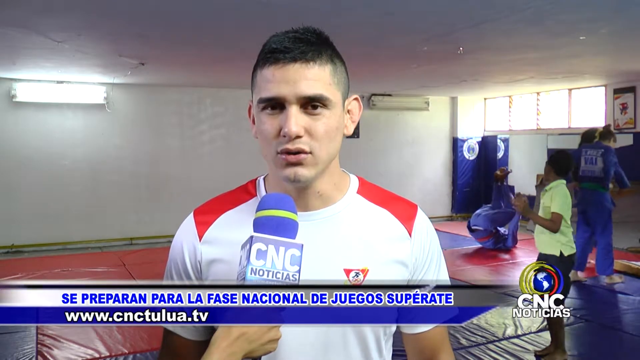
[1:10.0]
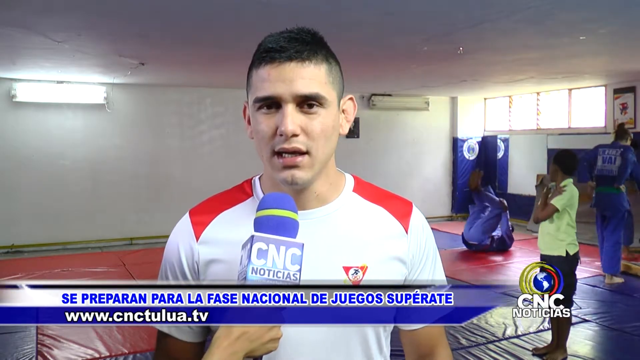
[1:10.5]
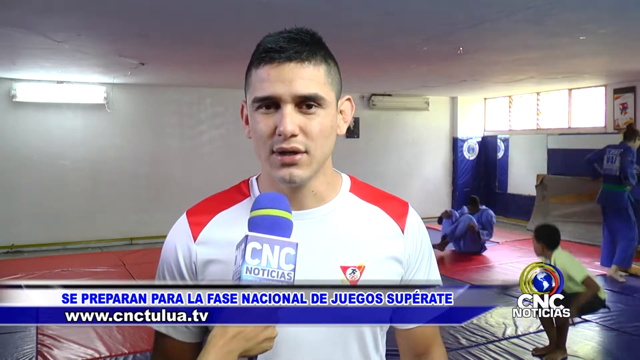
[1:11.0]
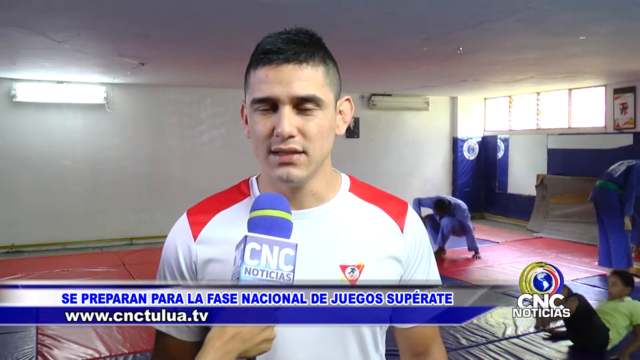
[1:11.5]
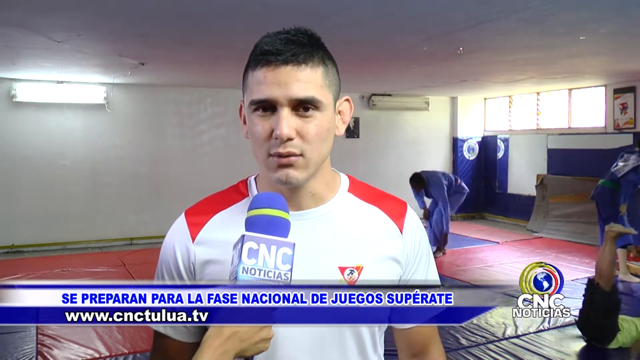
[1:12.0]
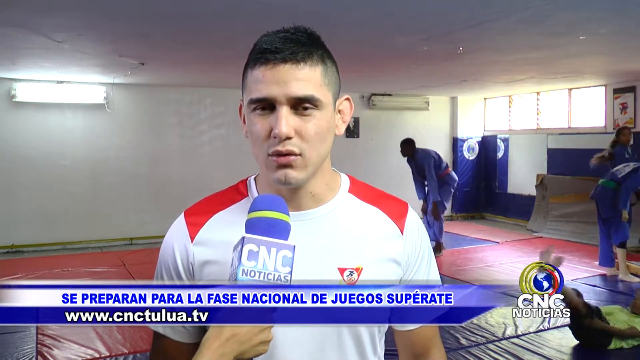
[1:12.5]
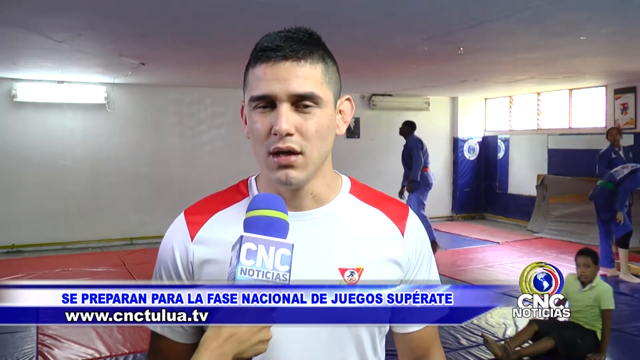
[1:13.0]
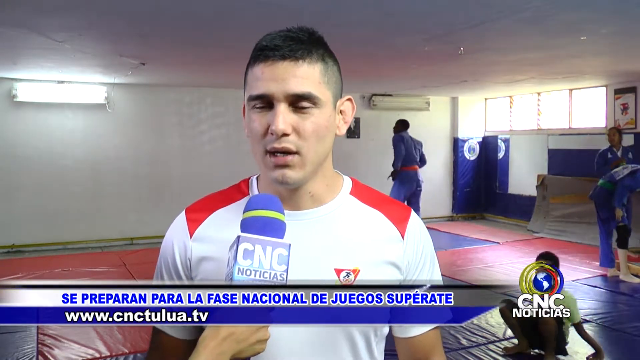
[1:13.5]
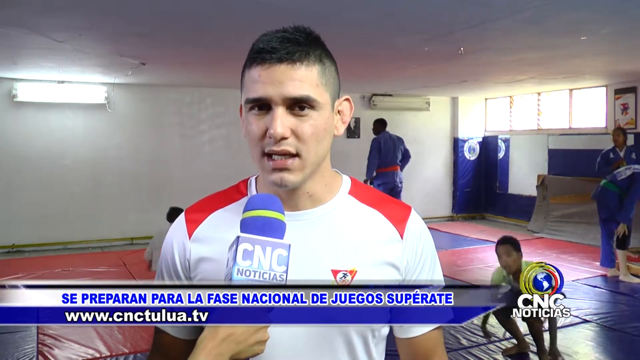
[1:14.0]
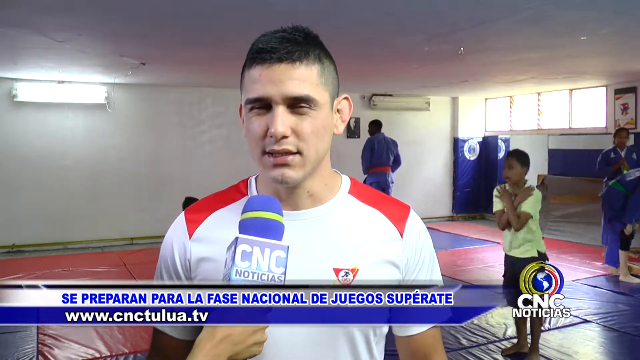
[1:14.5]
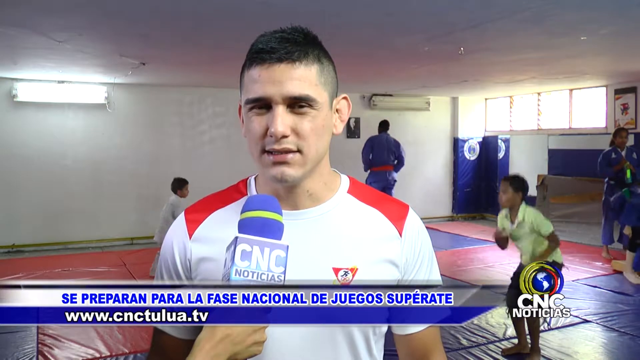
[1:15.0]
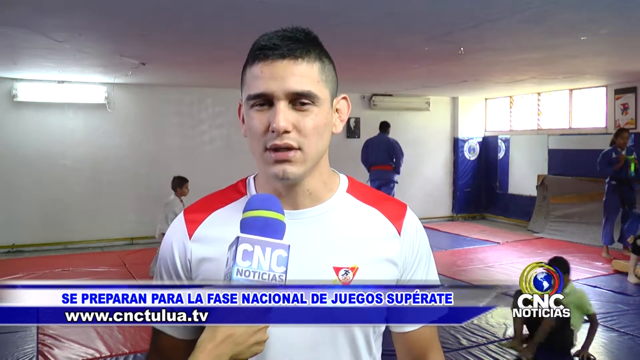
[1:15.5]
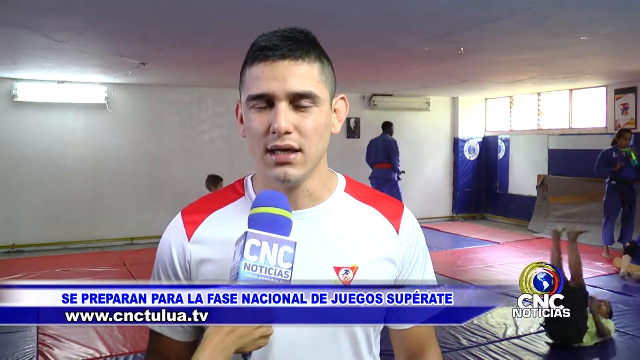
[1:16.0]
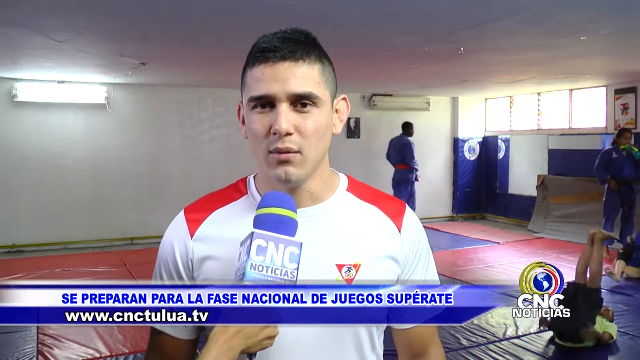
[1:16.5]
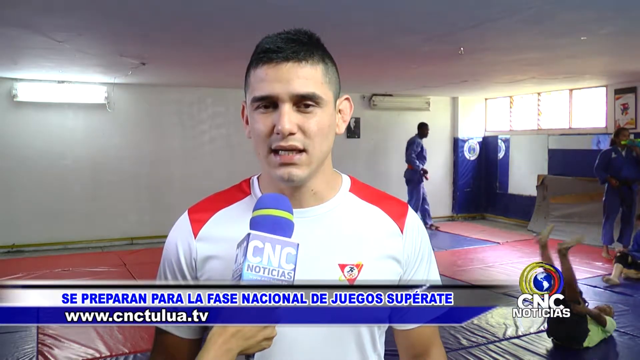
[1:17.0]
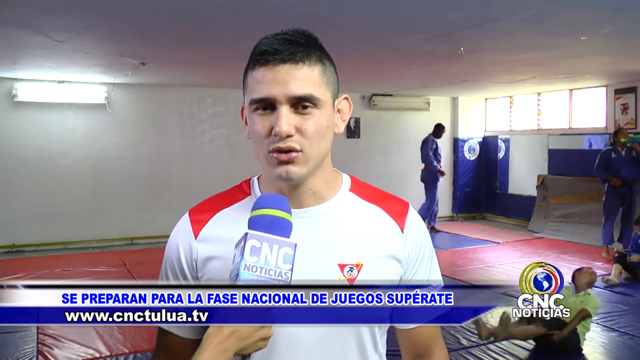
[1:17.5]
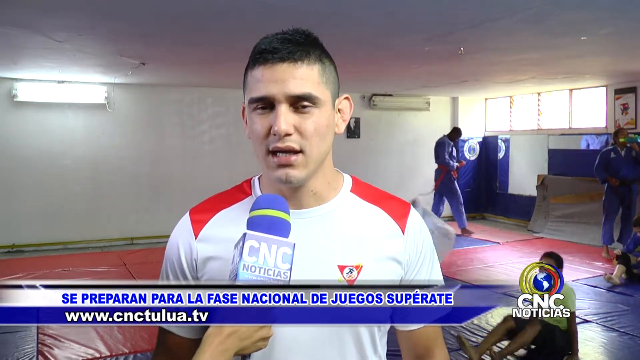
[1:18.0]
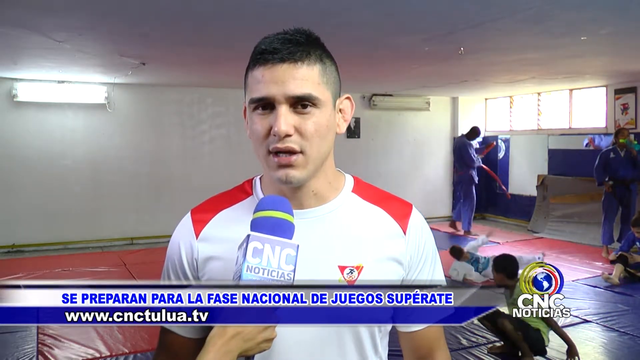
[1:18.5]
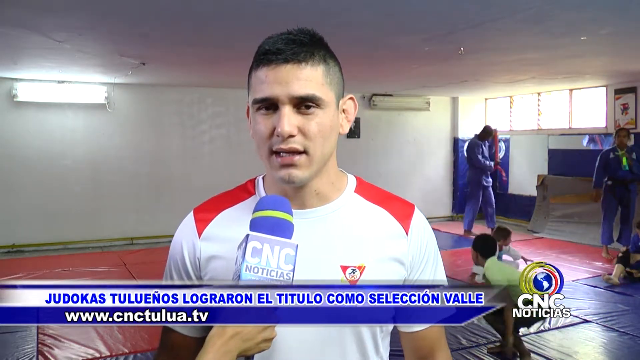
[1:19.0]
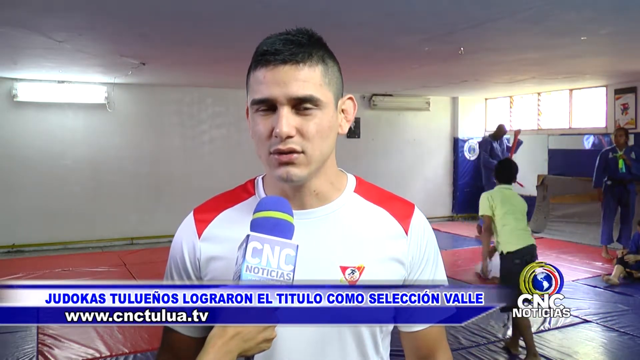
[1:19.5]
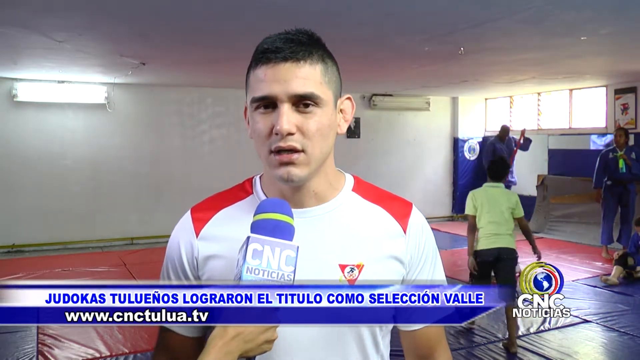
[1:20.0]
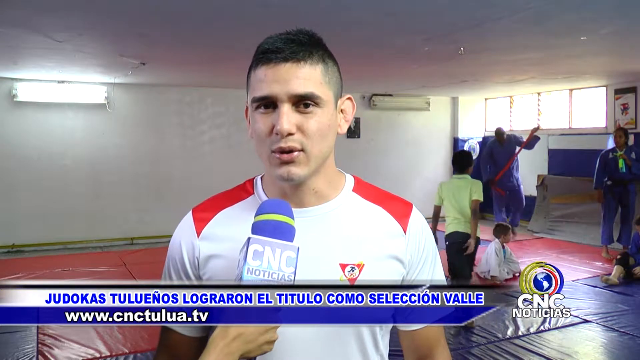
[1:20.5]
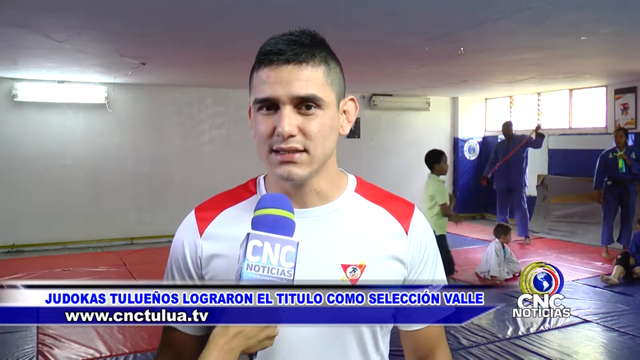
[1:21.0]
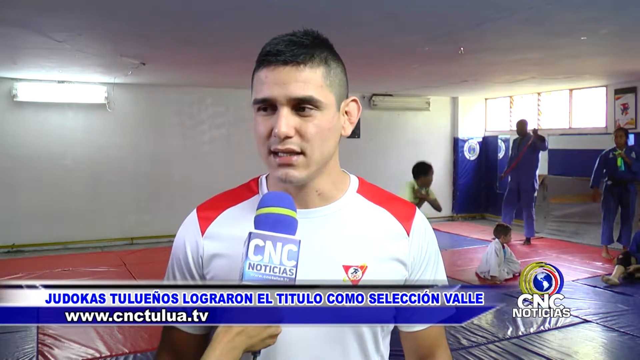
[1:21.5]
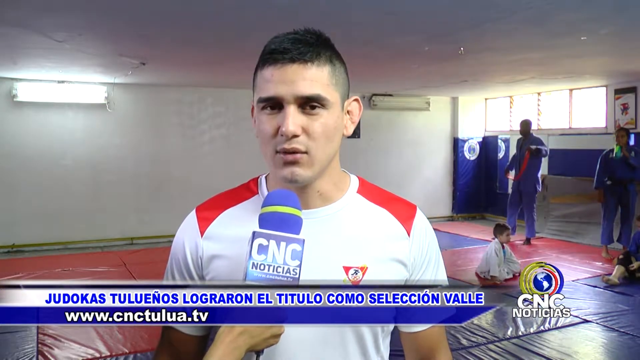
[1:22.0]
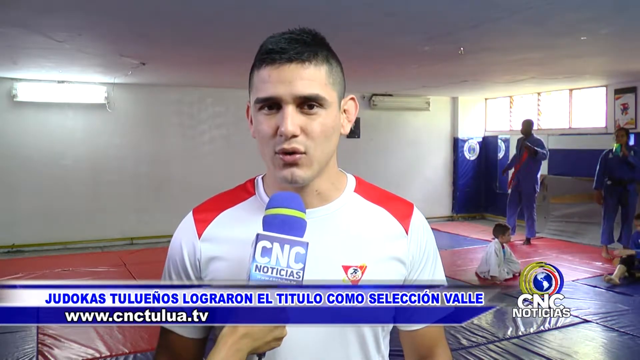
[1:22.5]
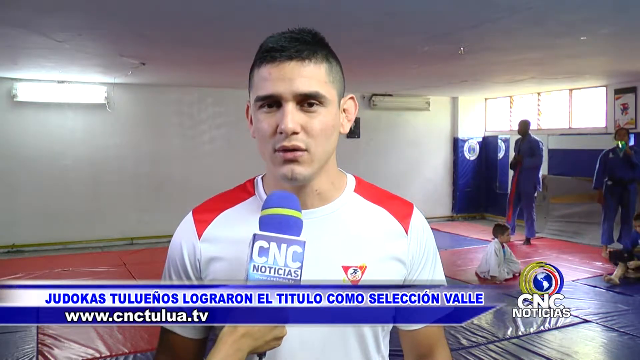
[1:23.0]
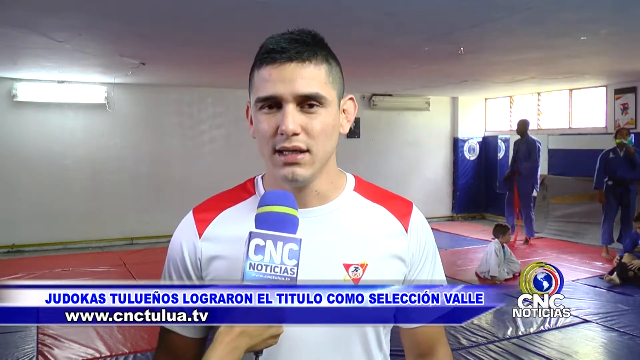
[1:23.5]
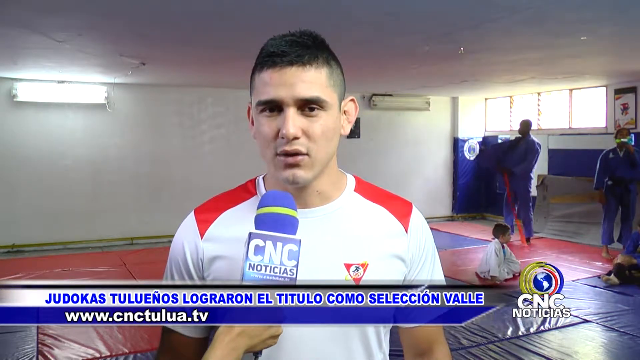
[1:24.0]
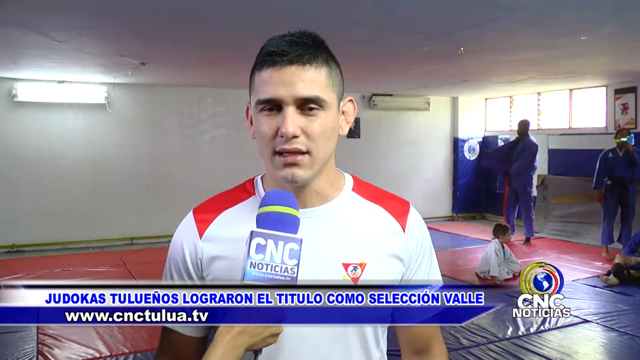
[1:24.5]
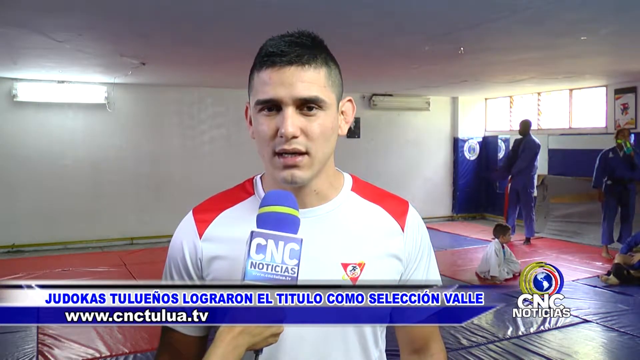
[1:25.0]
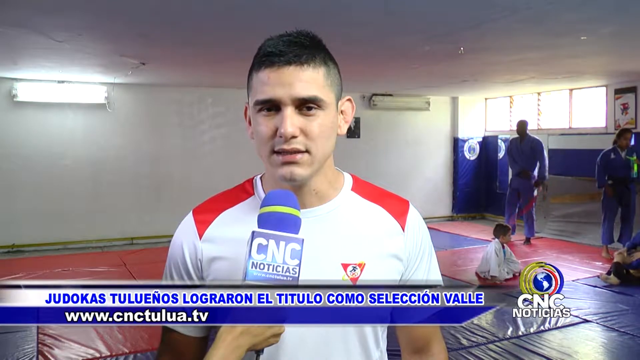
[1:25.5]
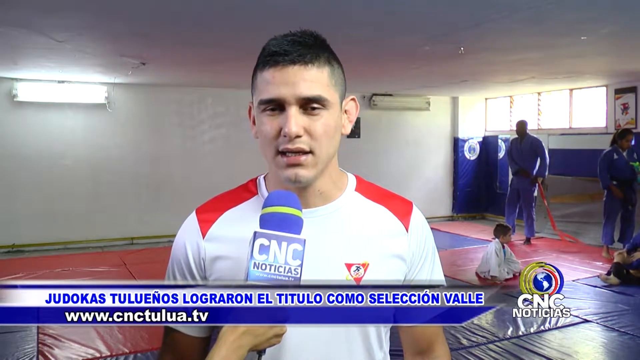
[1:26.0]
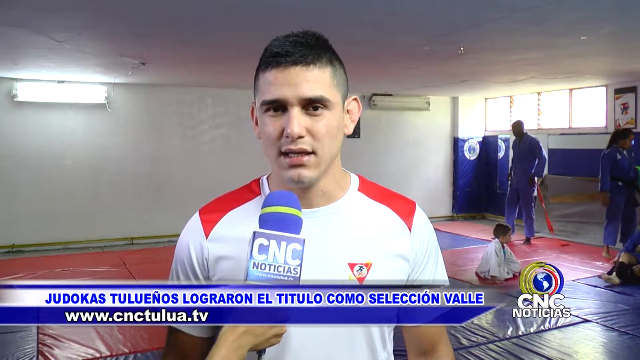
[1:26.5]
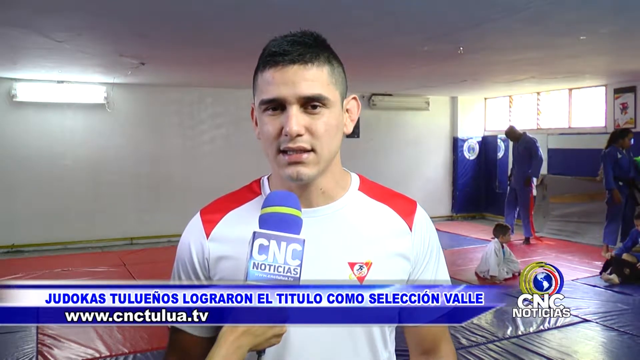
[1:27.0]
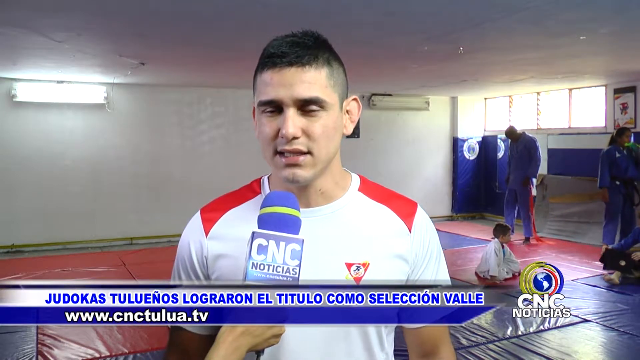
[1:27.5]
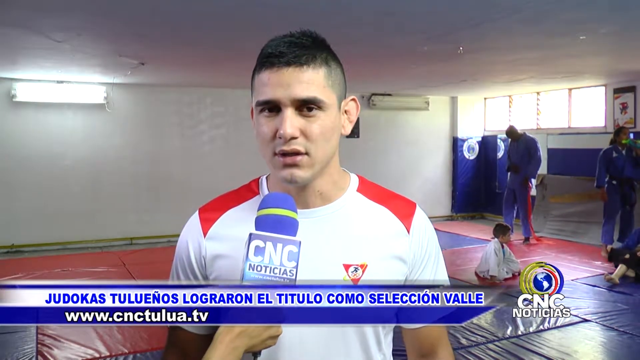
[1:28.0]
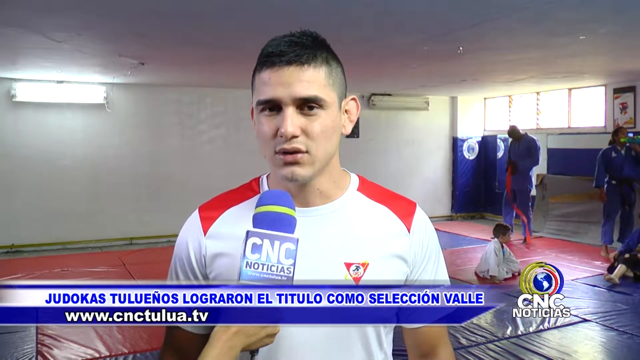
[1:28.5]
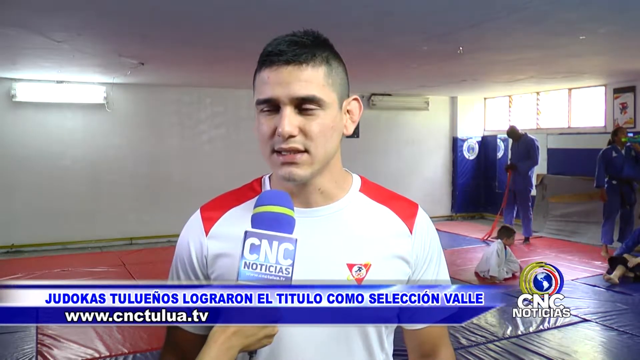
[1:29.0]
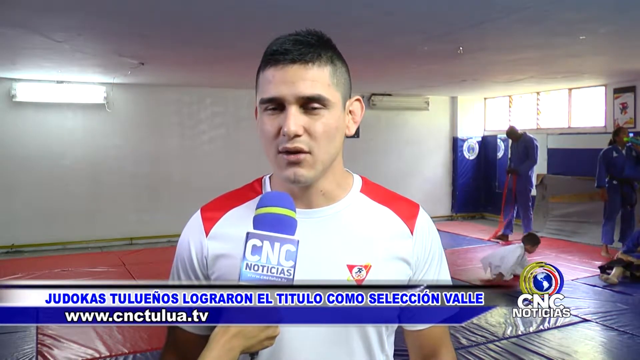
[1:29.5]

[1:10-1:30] A white man with a fresh haircut, clean-shaven sides and short black hair on top continues his interview, looking into the camera, as a hand holds the microphone in front of him. Behind him, students stand all over the place, exercising on the blue and red mats; children stand up, land on their bodies and stand up again. He keeps talking to the camera, blinking slowly. A young Black child in a light green shirt on the right of the screen, closest to the camera, repeatedly lands slowly on his back and stands back up, over and over. The view then moves further back in the gym: another man stands at the very end of the gym by the windows, untying and fixing his belt, a few girls on the right of the screen chat with each other, and a young child in a white outfit sits on the floor.